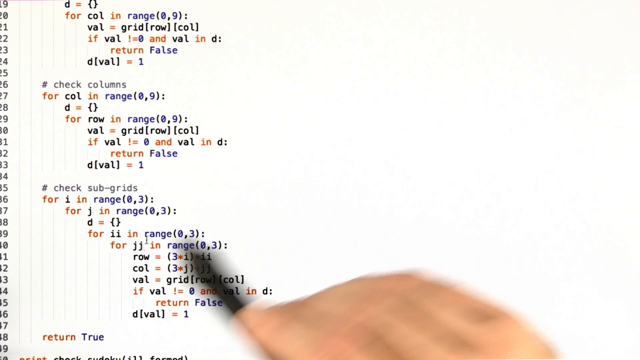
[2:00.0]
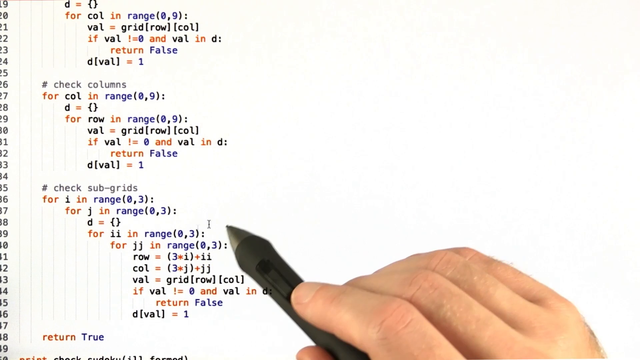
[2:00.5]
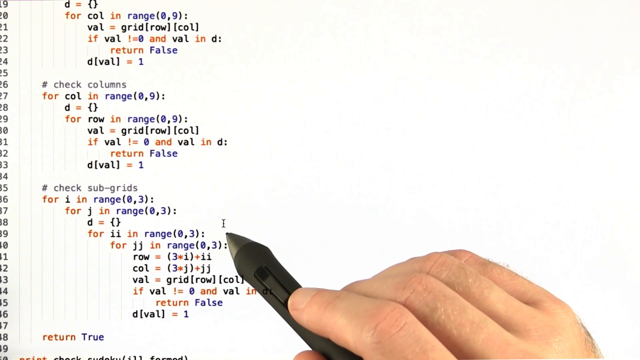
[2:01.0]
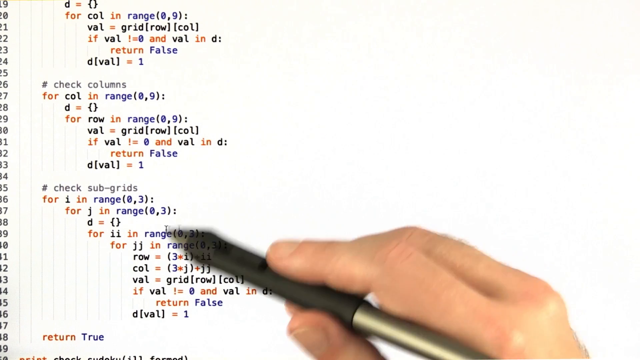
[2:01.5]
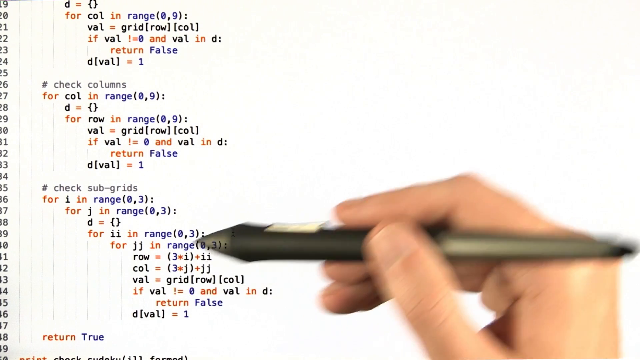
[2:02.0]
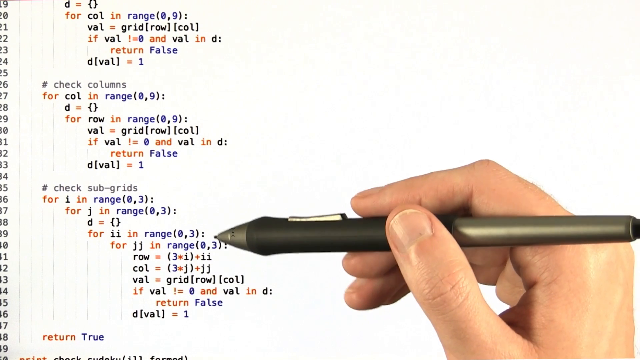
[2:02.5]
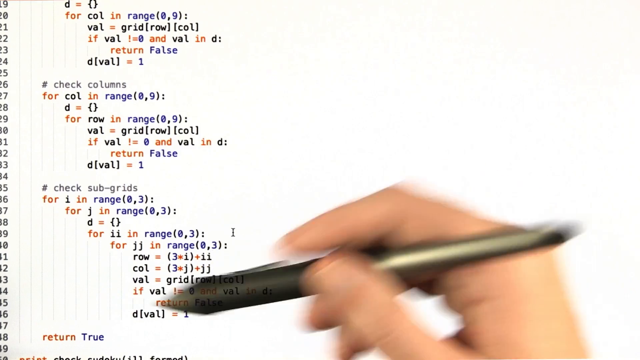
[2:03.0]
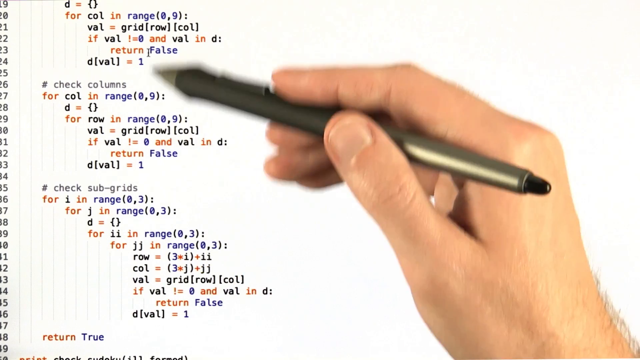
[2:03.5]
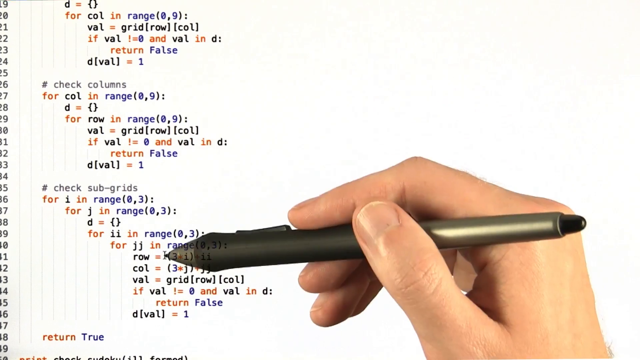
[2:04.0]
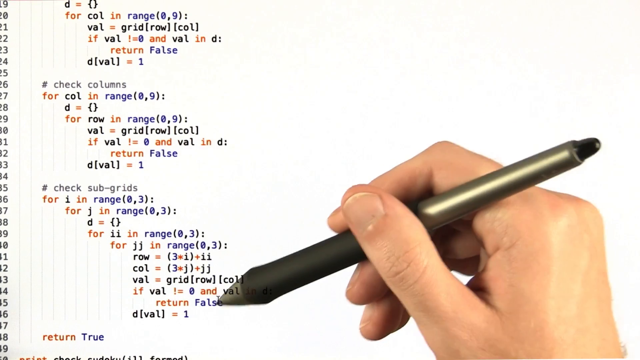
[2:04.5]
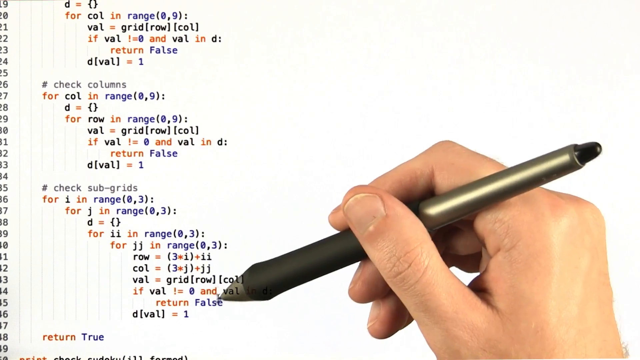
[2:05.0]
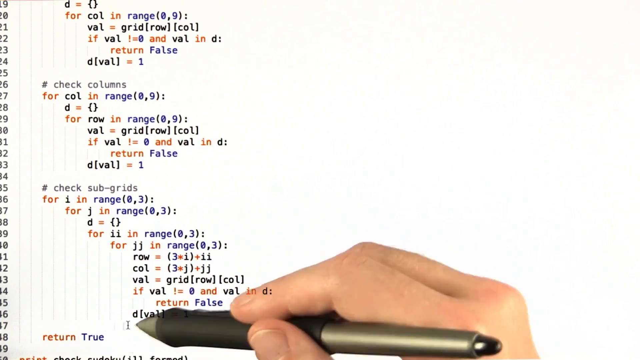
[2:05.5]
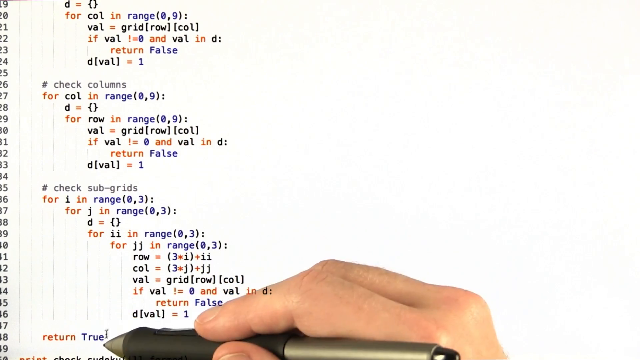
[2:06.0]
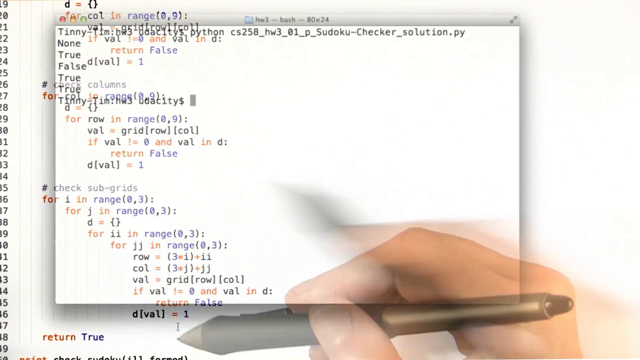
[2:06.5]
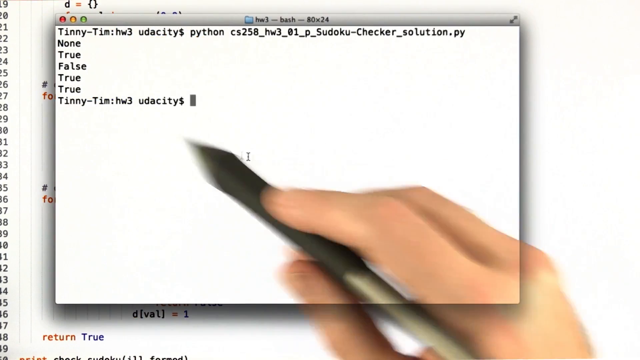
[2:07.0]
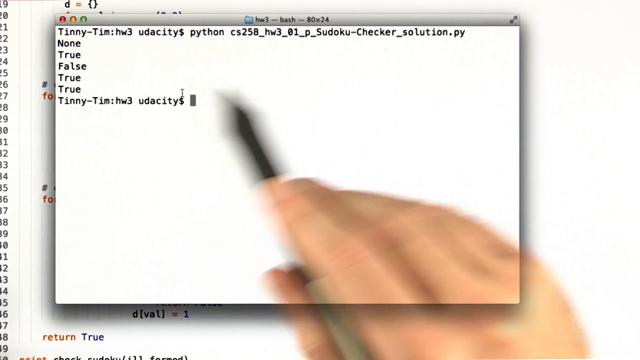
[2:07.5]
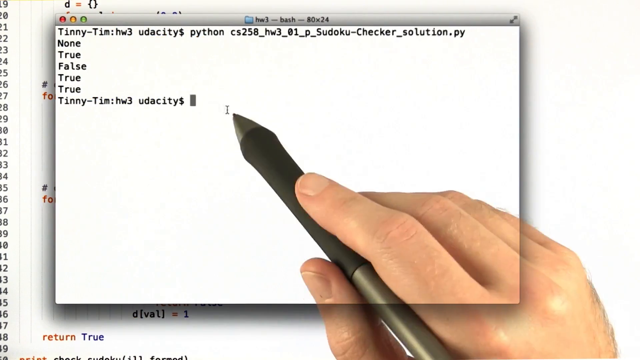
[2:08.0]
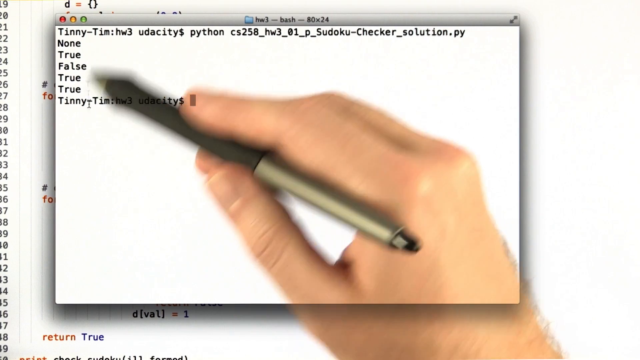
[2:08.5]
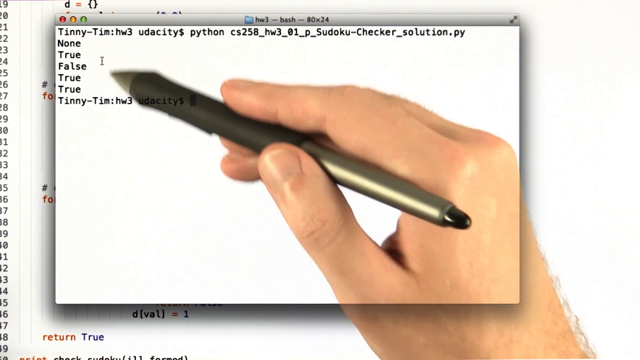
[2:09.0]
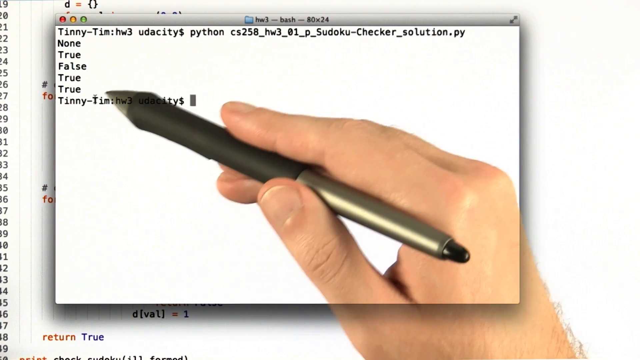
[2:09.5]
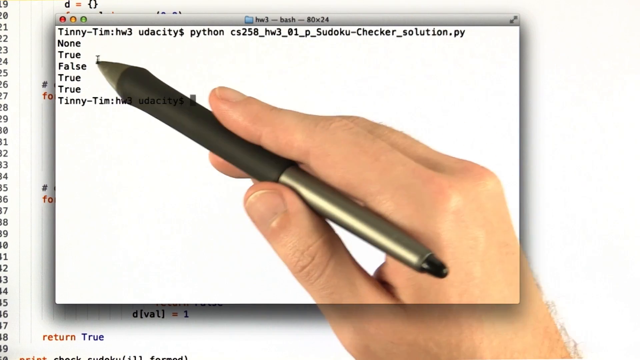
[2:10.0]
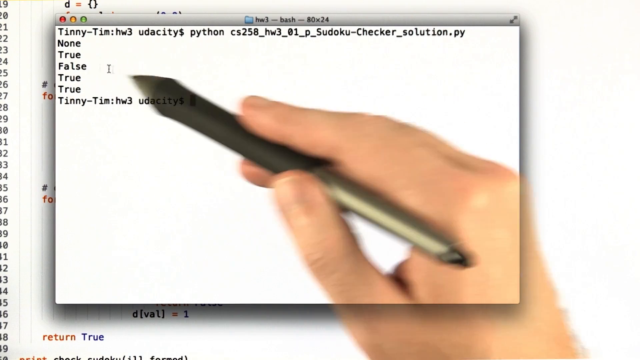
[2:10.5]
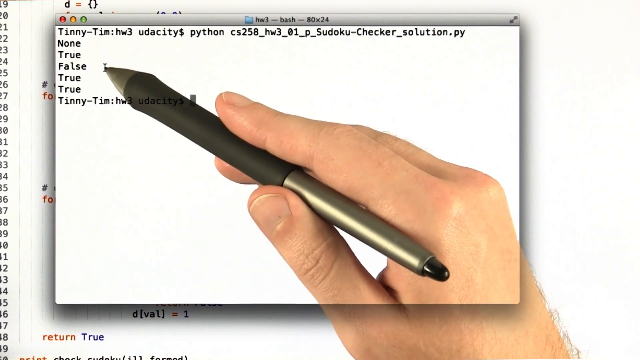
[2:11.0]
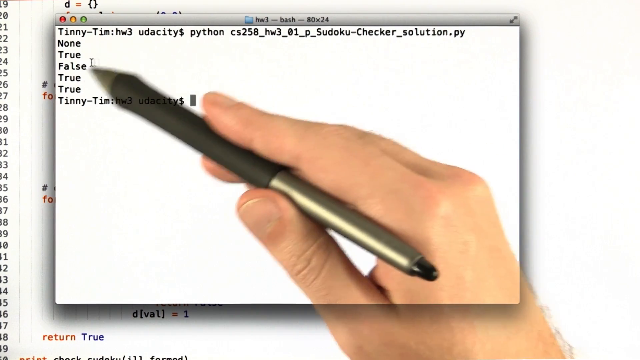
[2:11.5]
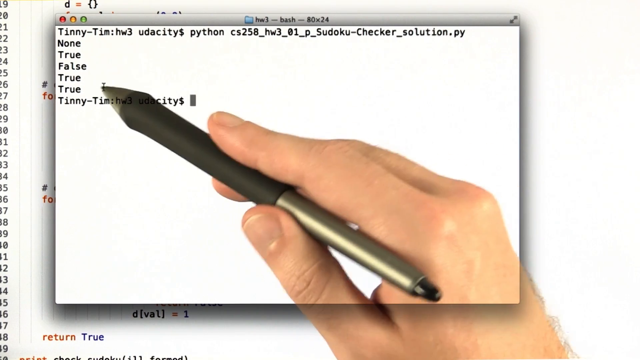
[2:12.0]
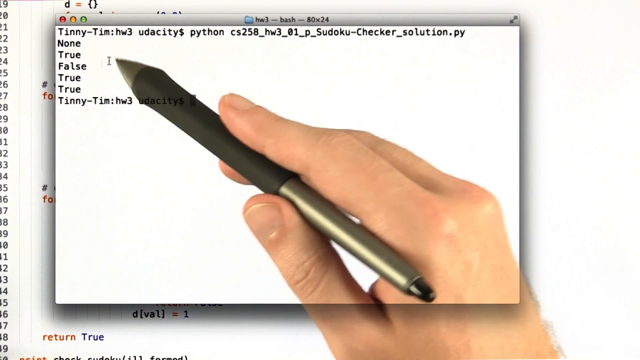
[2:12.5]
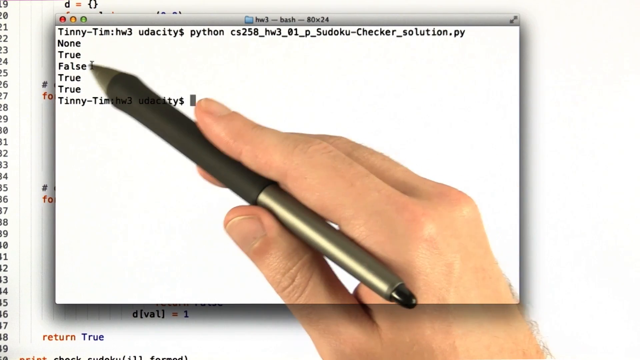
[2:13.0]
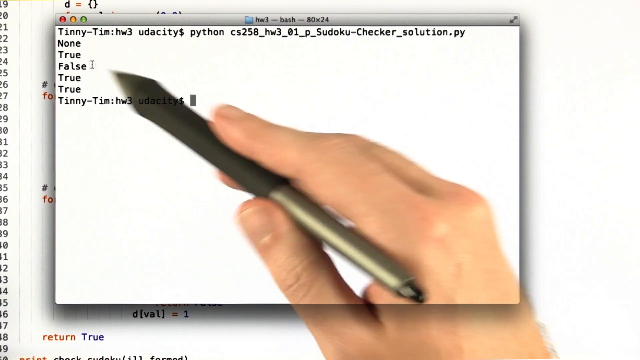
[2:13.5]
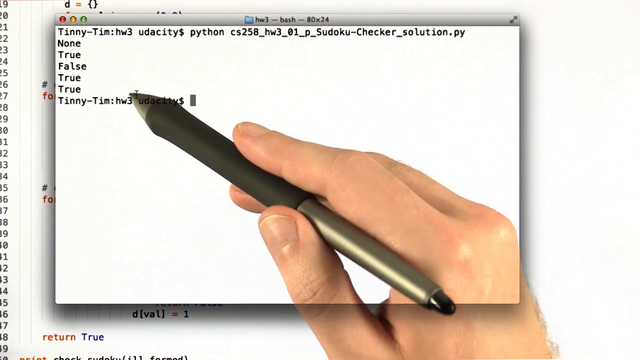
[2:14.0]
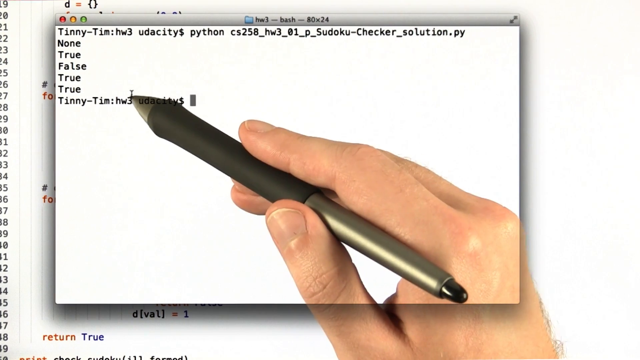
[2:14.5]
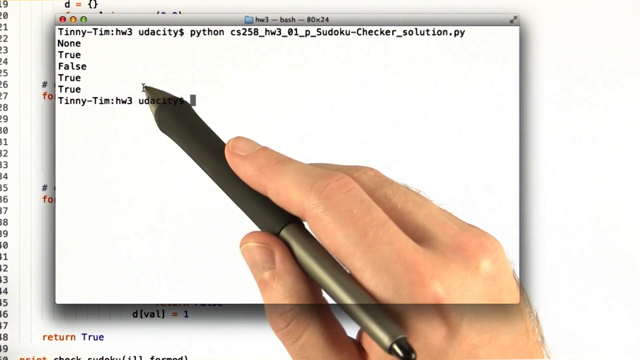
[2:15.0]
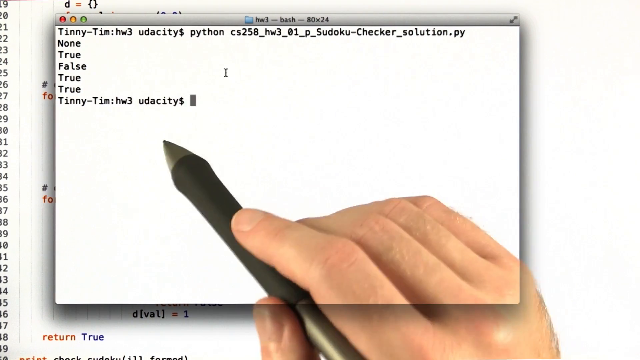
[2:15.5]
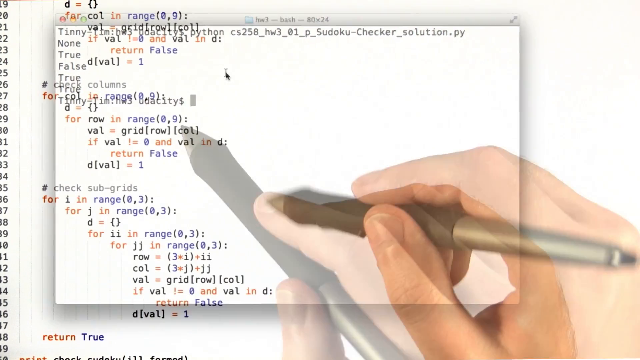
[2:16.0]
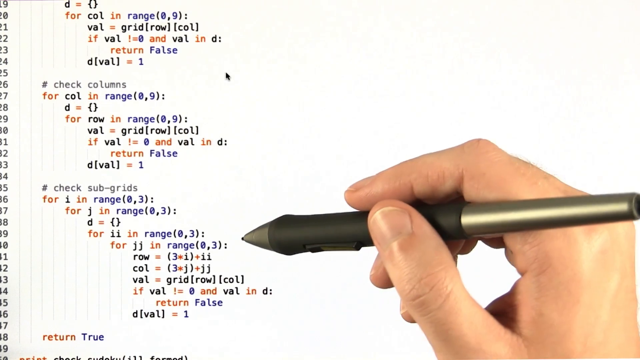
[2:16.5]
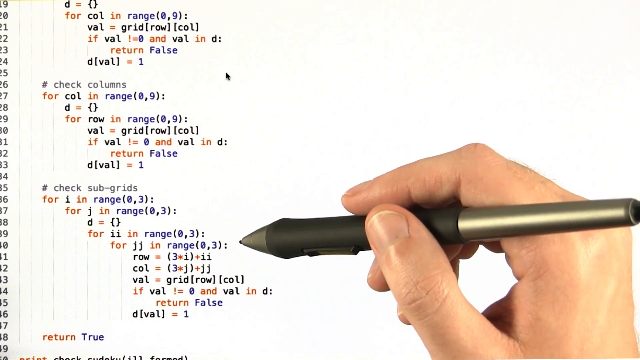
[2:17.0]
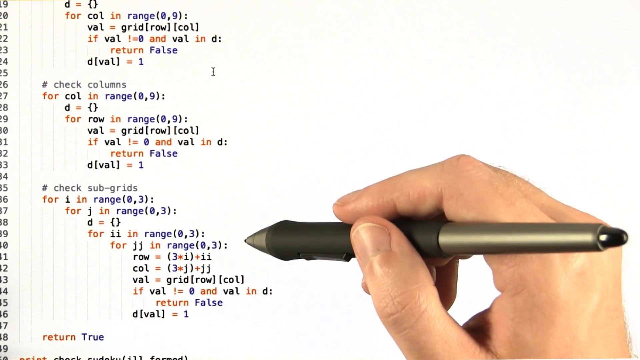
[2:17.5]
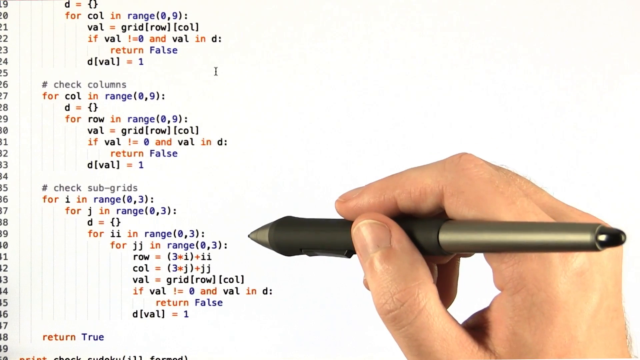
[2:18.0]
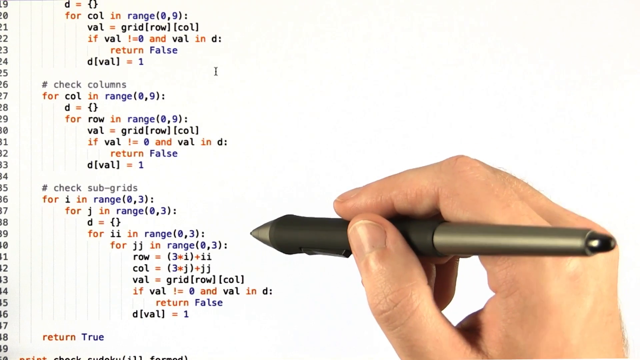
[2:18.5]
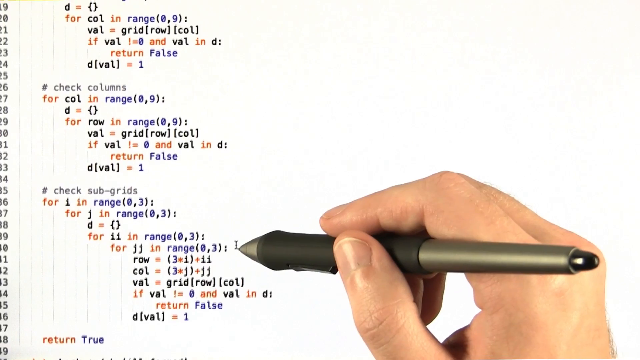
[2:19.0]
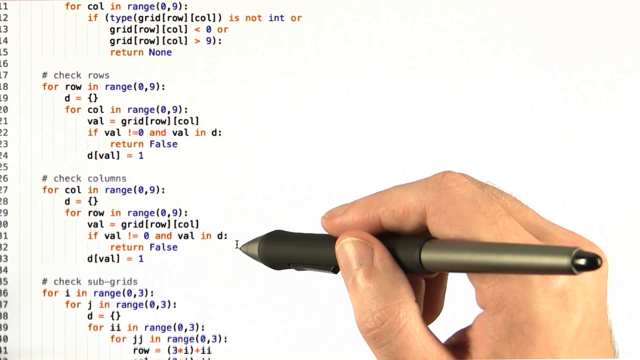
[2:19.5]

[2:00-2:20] The screen shows three sections of code on a white background with a white grid and numbers running top to bottom on the left. The person is on the third section, which has a for statement, going over a part with three variables: row, column and value. Several seconds in, the view transitions to a pop-up that looks almost like a notepad, with a white background, some text at the top, and what looks like notes on the right. On its left-hand side it lists "none", "true", "false", "true" and "true", and the person holds the pen over the different options, apparently explaining each one. The view then transitions back to the code.